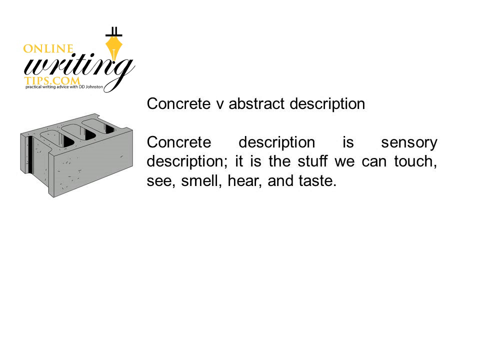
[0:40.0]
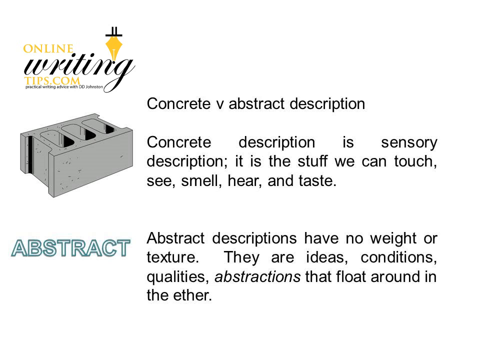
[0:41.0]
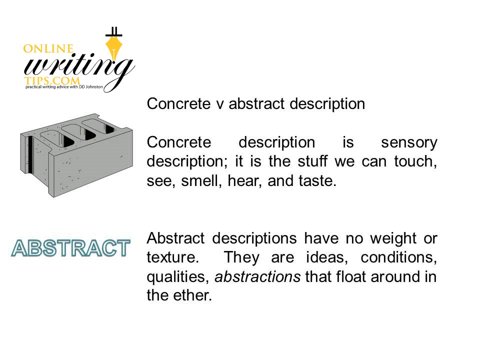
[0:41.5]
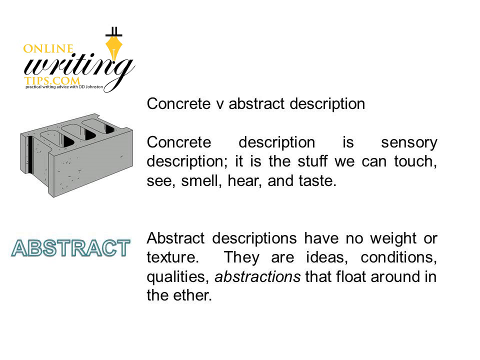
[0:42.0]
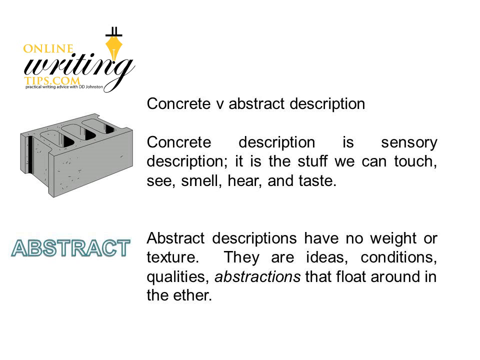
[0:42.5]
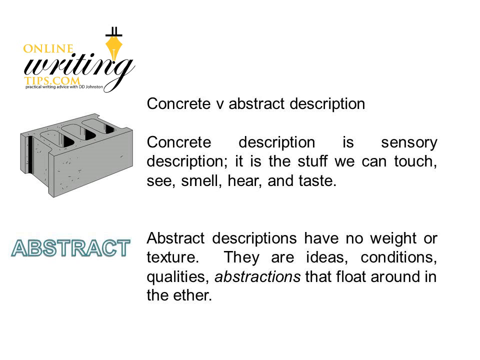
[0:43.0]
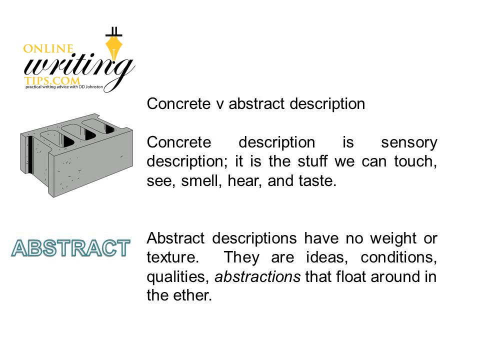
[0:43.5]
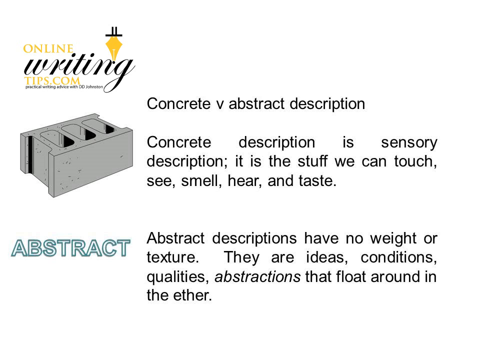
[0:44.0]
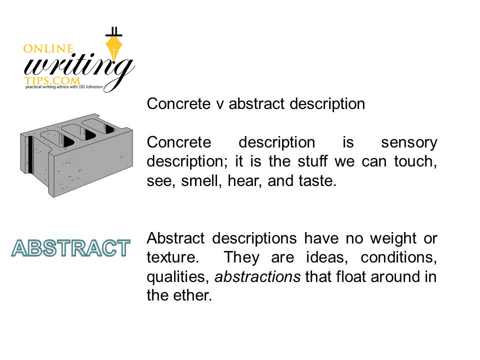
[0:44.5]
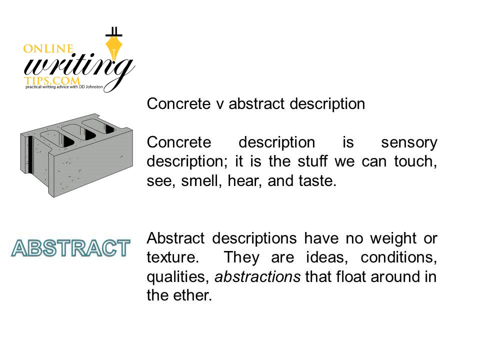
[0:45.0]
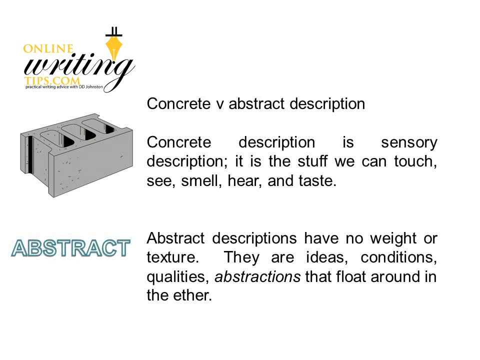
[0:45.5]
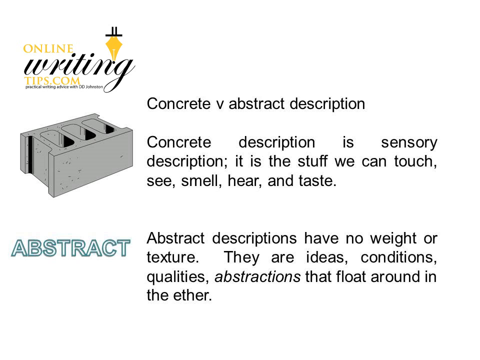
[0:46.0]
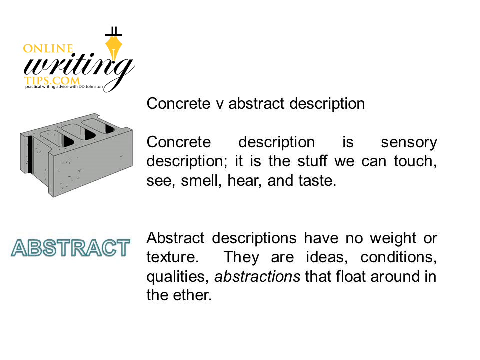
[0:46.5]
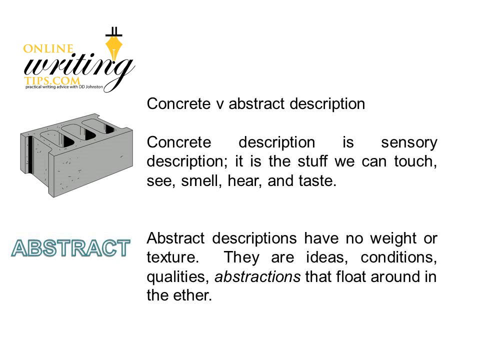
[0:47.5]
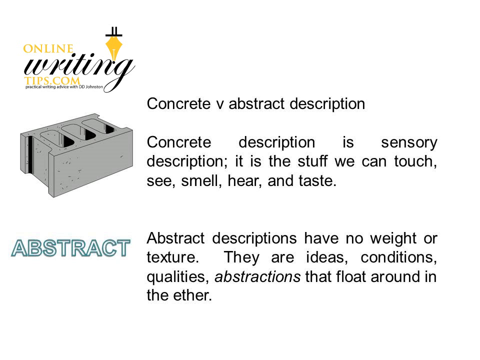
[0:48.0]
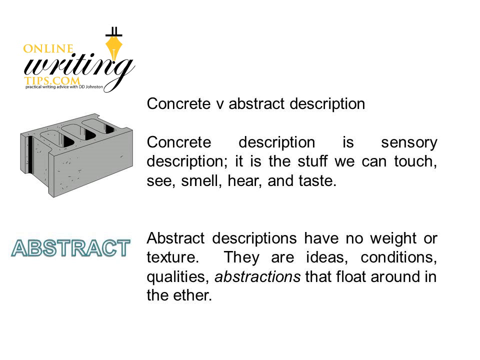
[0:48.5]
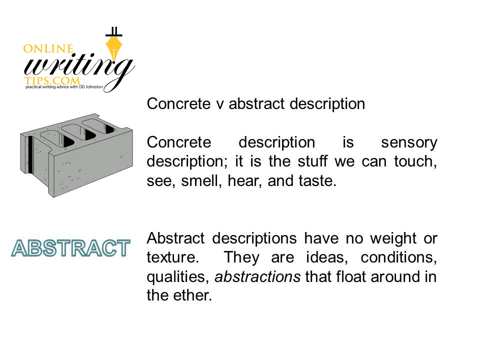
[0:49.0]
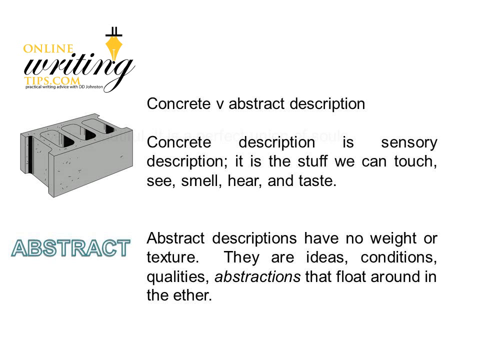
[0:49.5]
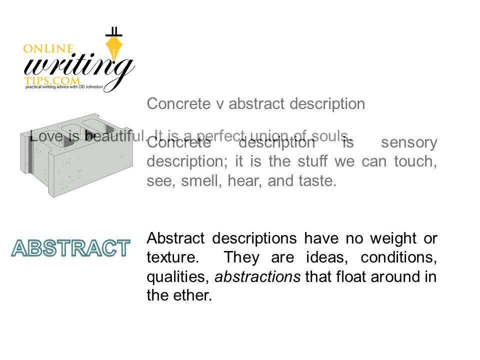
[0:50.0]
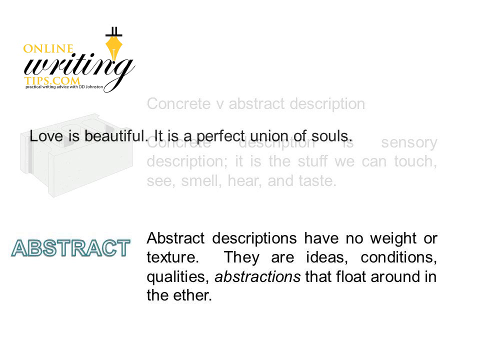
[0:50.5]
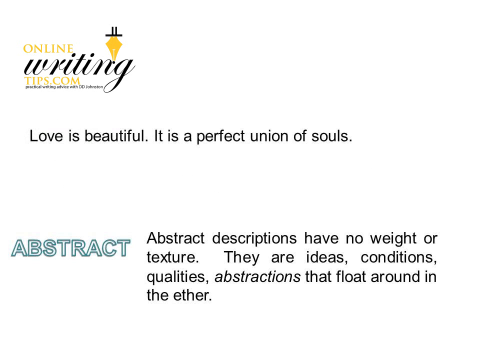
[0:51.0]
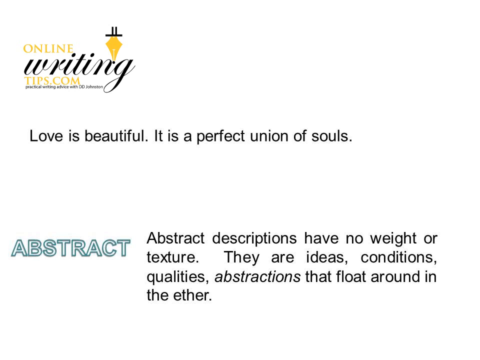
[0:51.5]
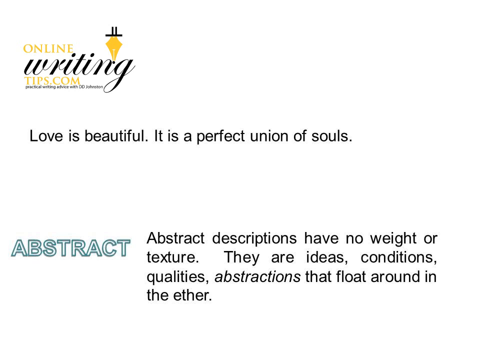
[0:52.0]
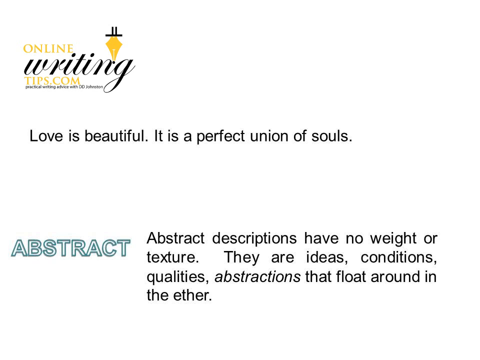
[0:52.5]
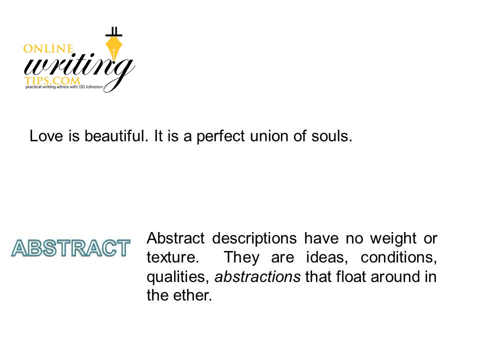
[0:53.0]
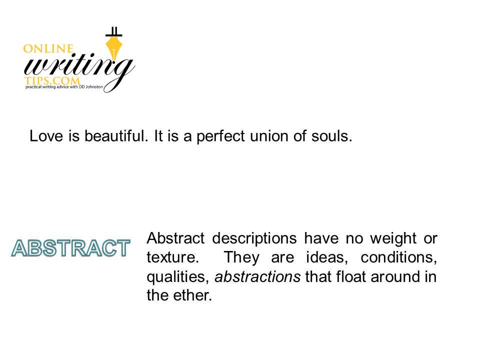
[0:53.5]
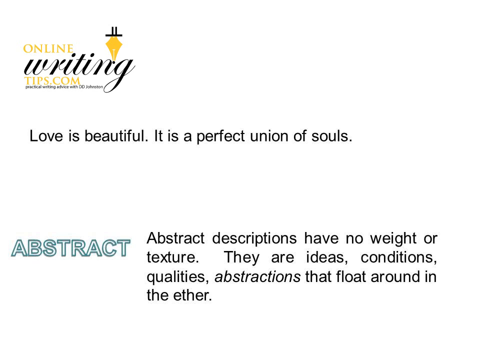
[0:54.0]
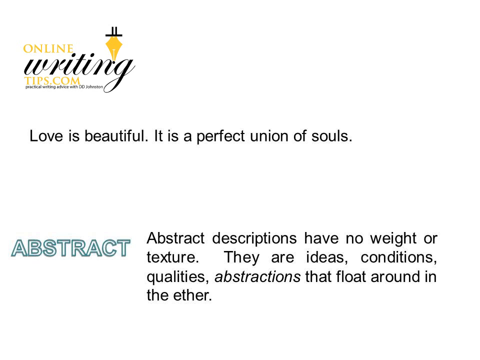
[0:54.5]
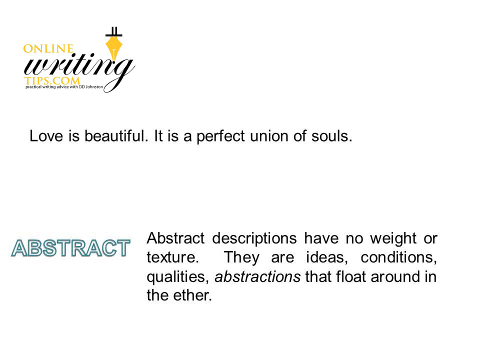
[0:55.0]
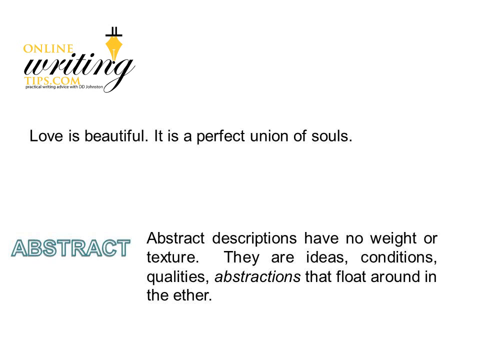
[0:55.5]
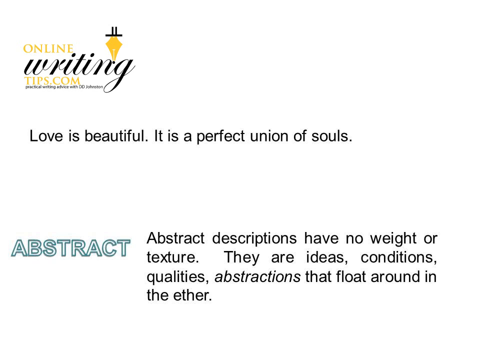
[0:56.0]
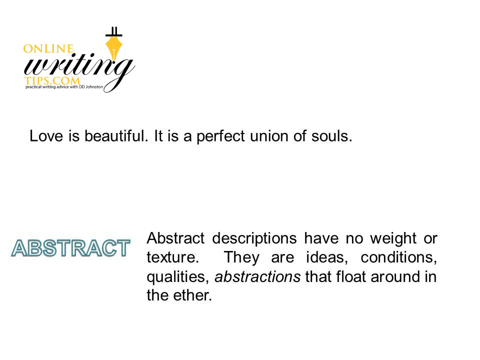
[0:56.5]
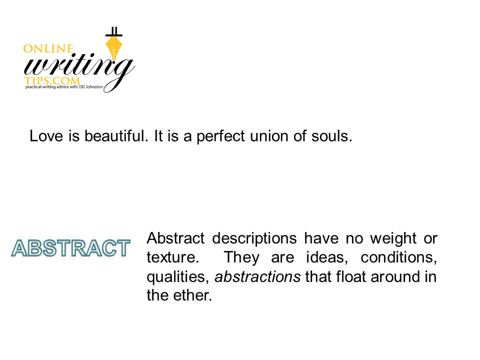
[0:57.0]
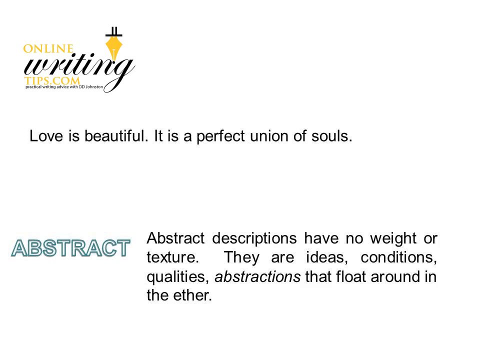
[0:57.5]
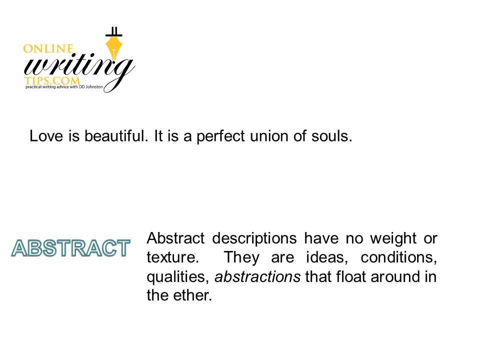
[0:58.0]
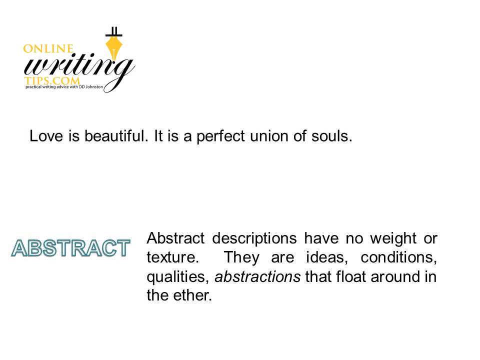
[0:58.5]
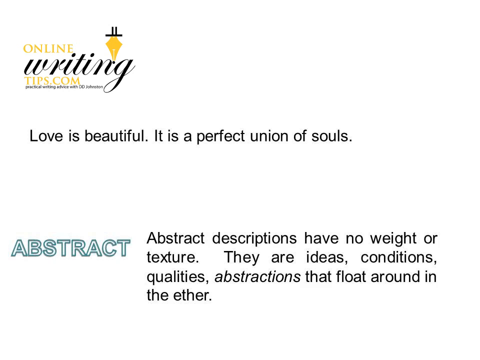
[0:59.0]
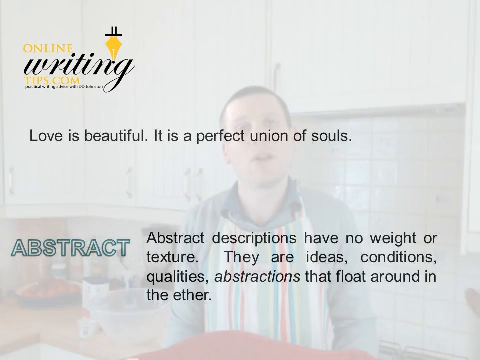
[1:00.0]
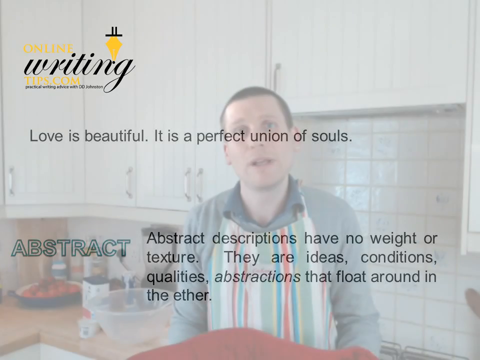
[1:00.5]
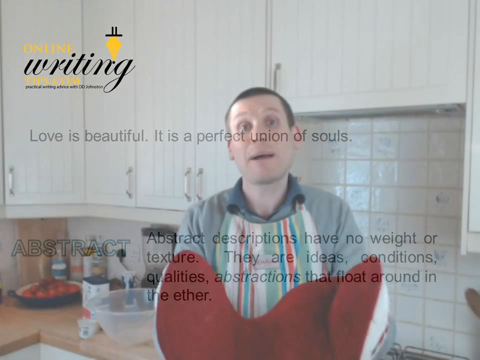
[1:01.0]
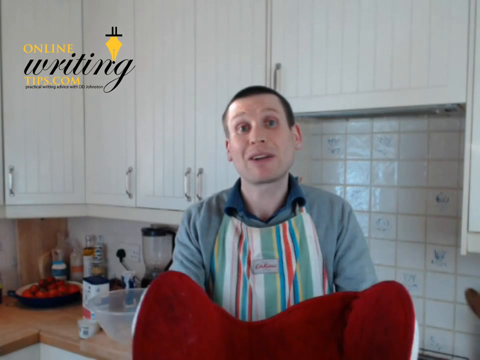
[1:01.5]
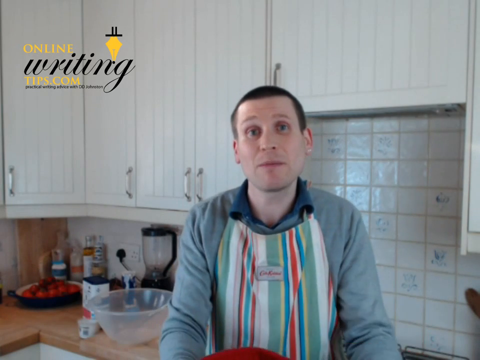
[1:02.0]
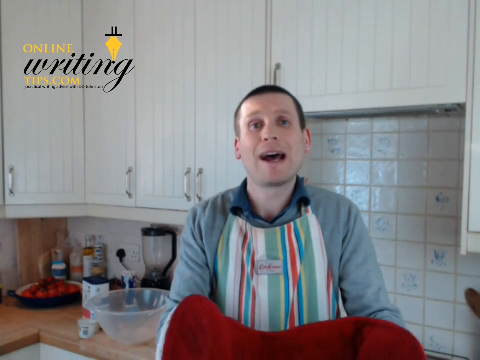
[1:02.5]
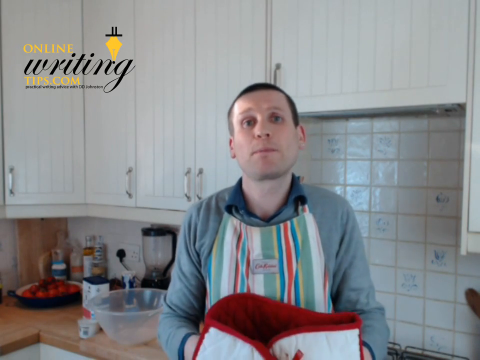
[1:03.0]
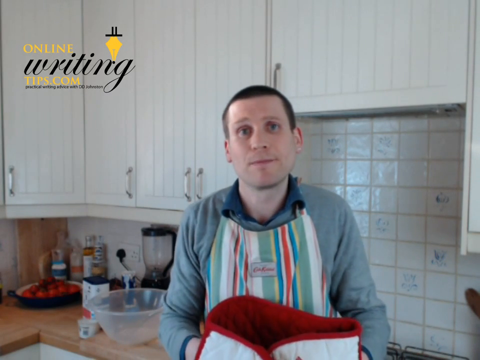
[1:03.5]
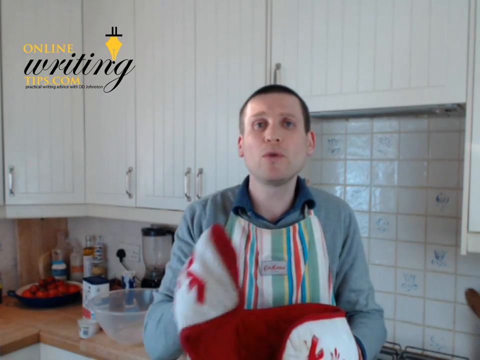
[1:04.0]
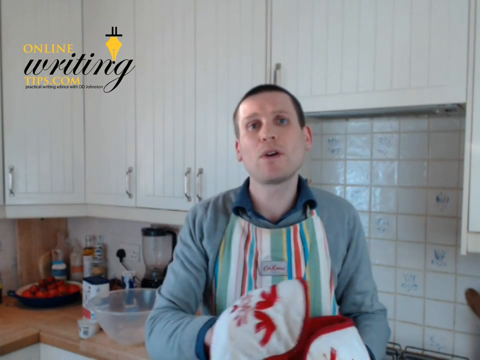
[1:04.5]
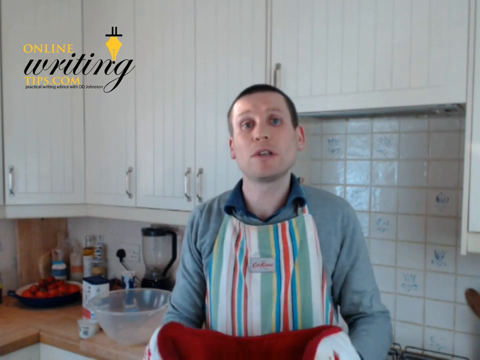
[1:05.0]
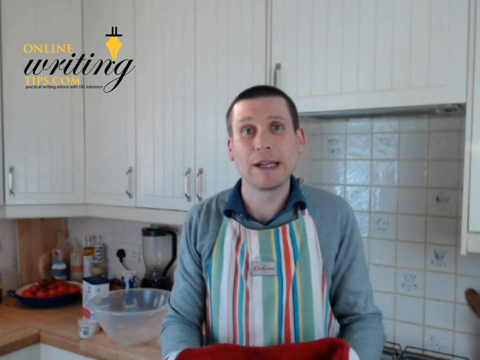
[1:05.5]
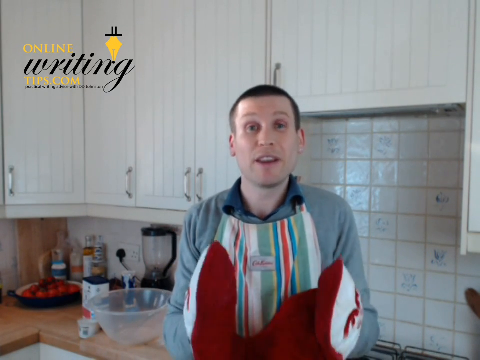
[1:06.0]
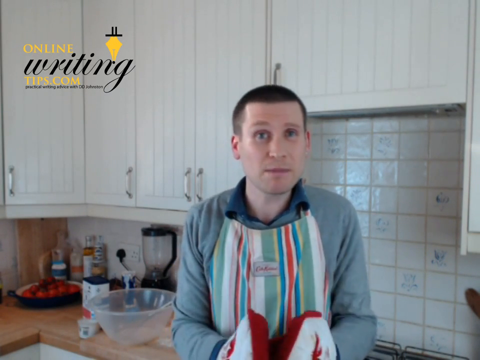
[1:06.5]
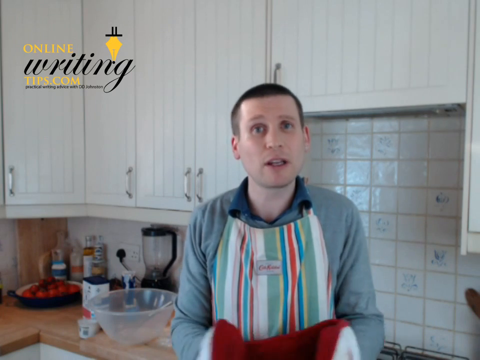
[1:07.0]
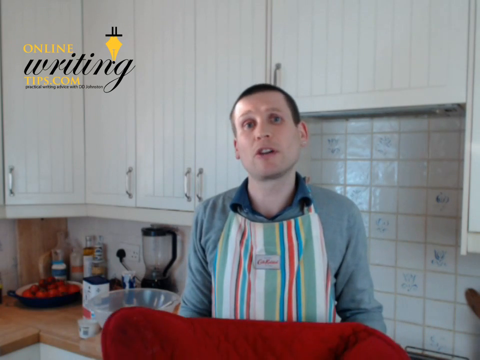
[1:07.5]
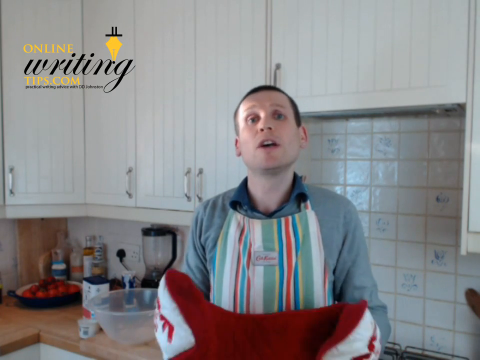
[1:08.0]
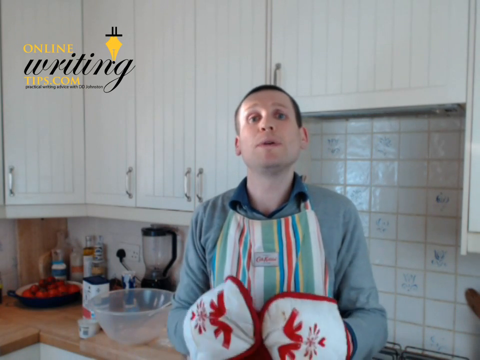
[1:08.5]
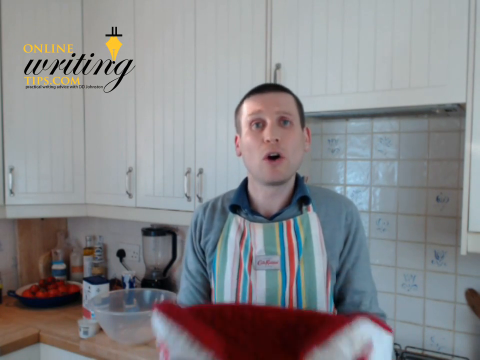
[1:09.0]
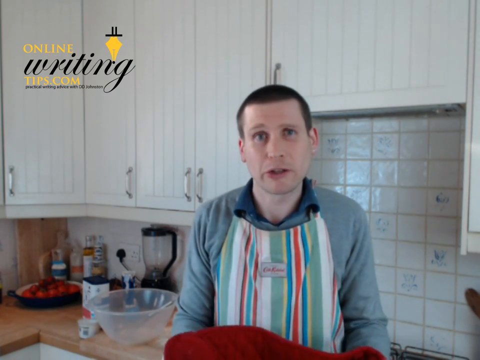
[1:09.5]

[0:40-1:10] A picture of a gray brick is shown with a description beside it, and the logo "OnlineWritingTips.com" with a picture of an old pen is in the top left corner. The definition beside the brick says "concrete versus abstract description. Concrete description is sensory description. It is the stuff we can touch, see, smell, hear, and taste." Underneath, the word "abstract" appears with a definition beside it: "abstract descriptions have no weight or texture. They are ideas, conditions, qualities, abstractions that float around in the ether." The brick and its definition disappear and are replaced by the words "Love is beautiful, it is a perfect union of souls." The scene then goes back to the man in the kitchen in the gray shirt, striped apron and red oven mitts, who continues talking to the camera in a very excited and animated way.